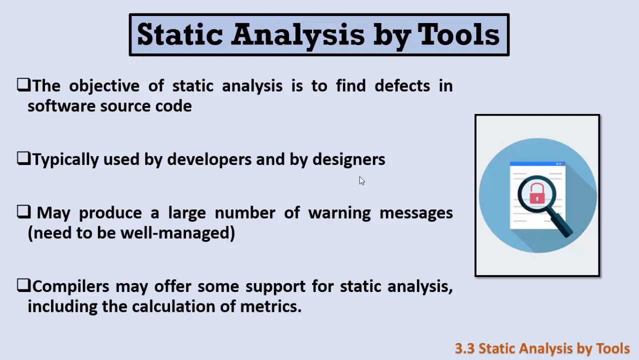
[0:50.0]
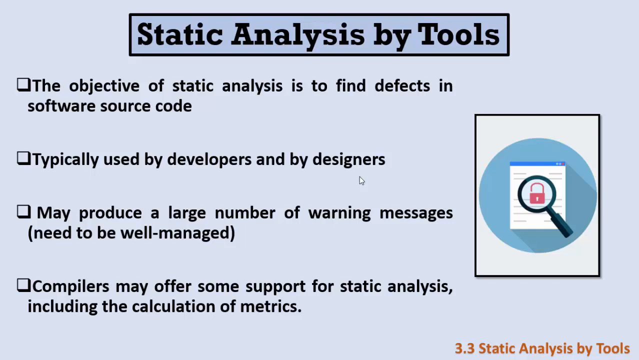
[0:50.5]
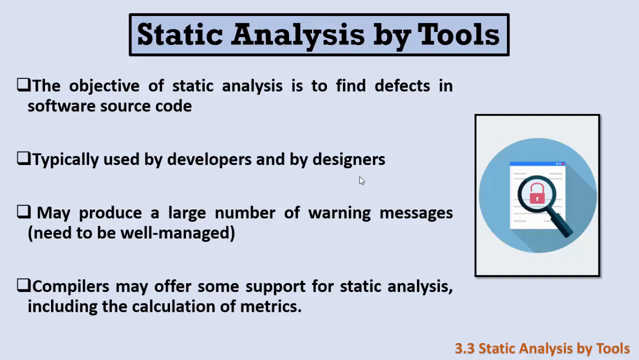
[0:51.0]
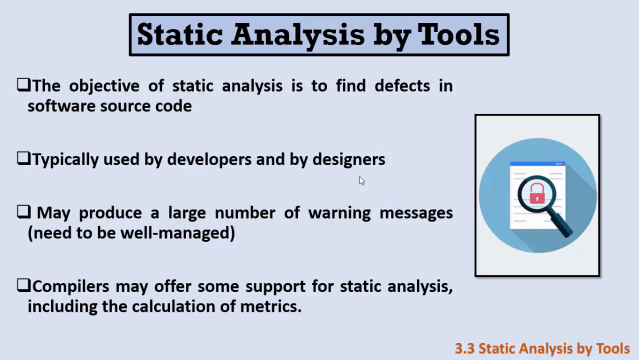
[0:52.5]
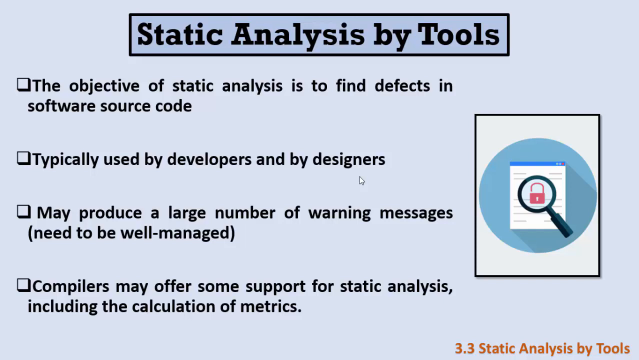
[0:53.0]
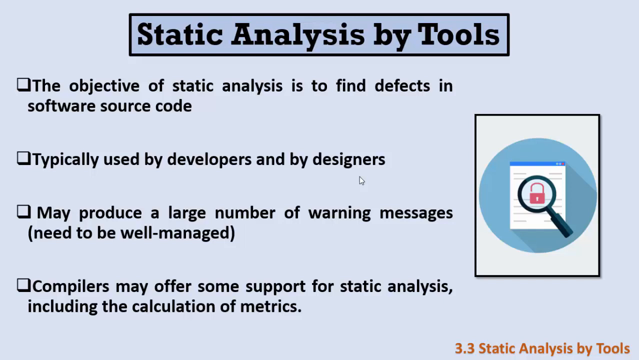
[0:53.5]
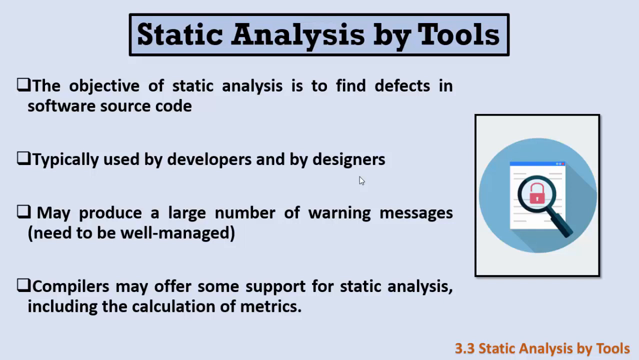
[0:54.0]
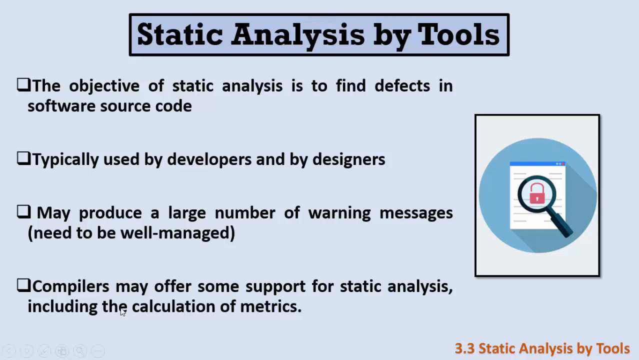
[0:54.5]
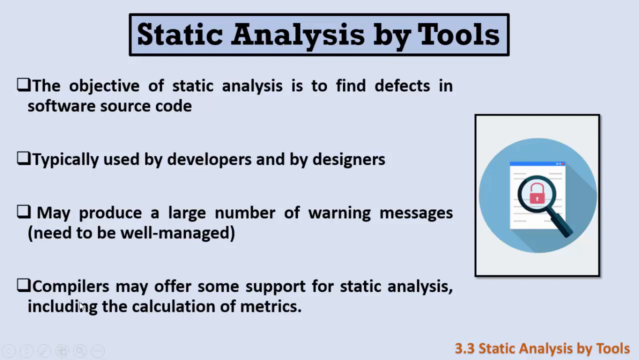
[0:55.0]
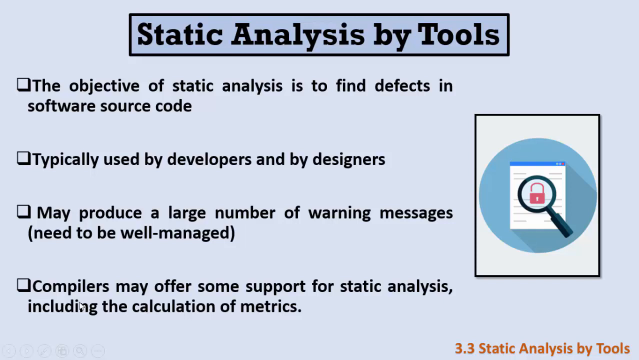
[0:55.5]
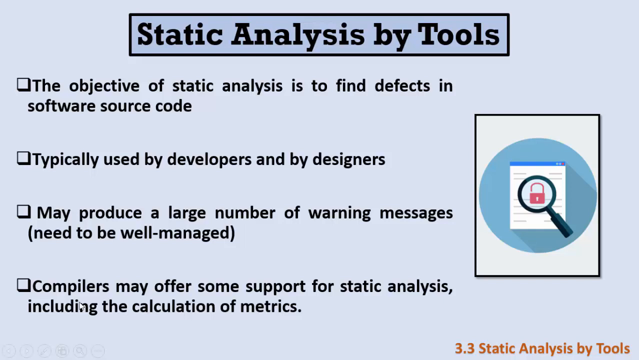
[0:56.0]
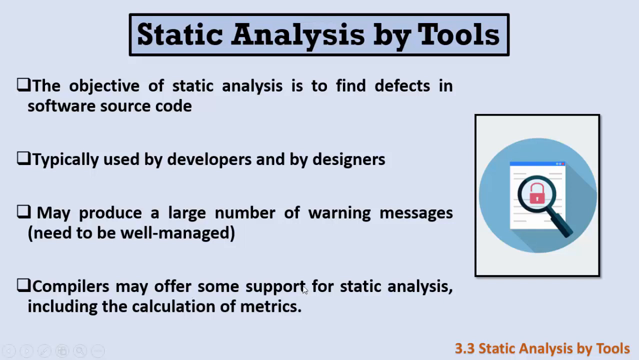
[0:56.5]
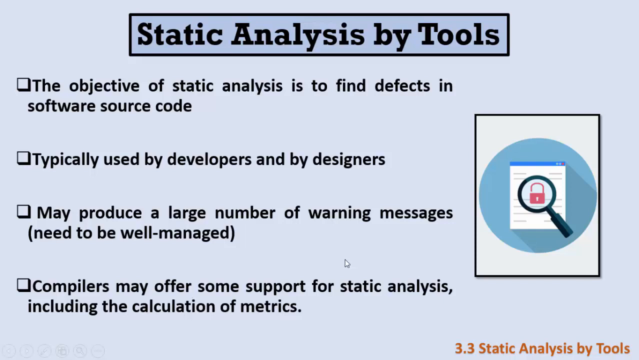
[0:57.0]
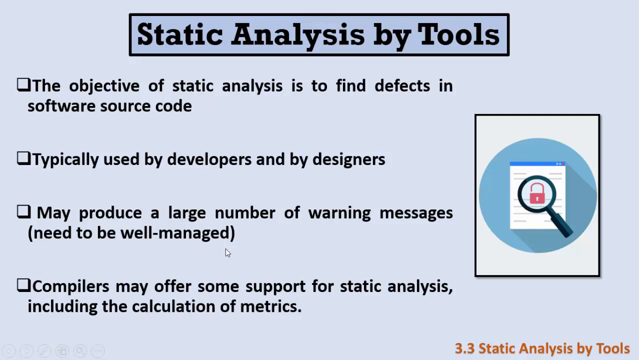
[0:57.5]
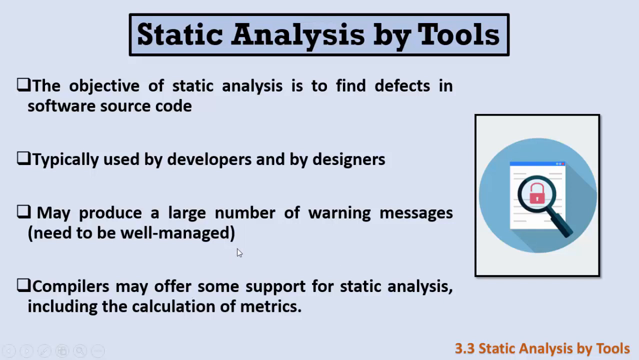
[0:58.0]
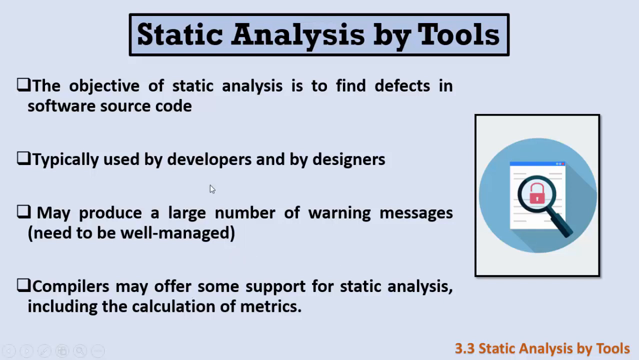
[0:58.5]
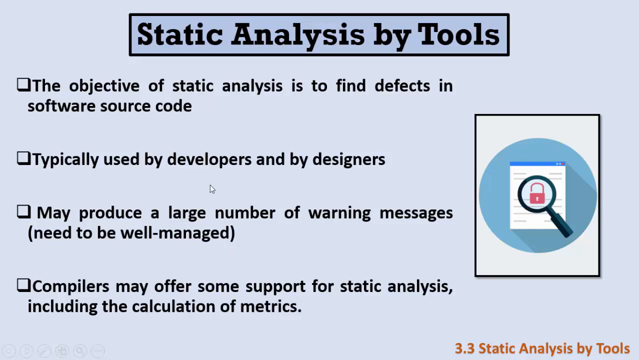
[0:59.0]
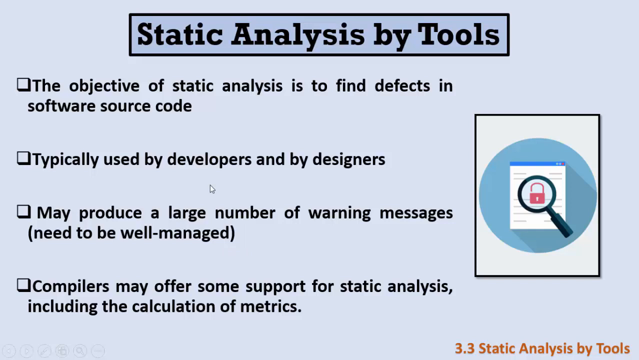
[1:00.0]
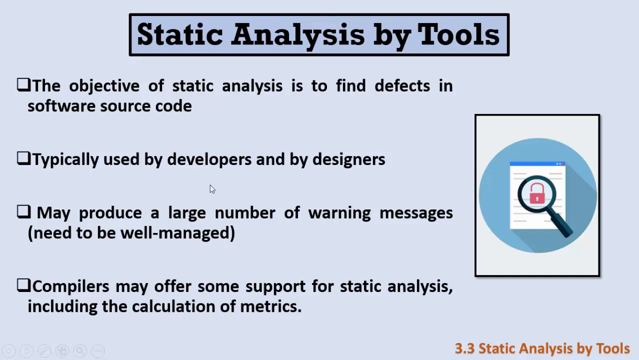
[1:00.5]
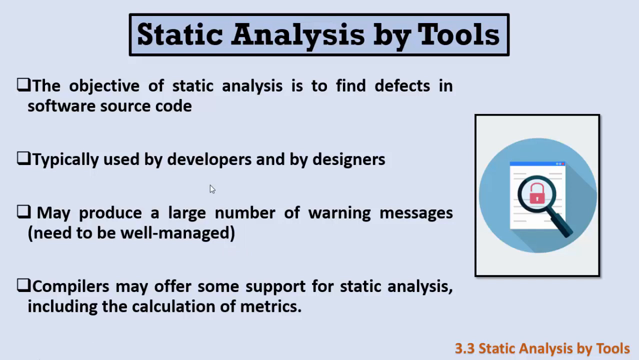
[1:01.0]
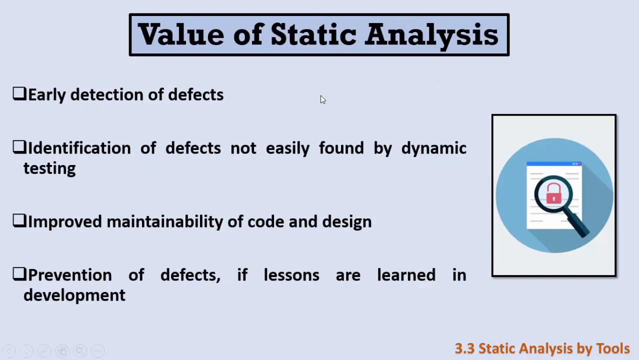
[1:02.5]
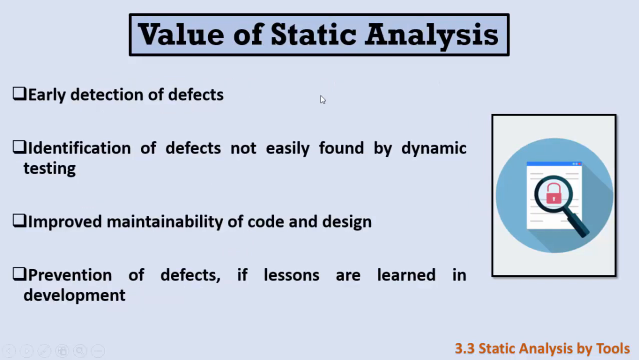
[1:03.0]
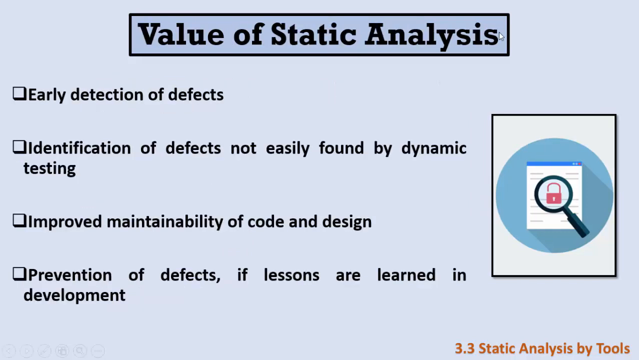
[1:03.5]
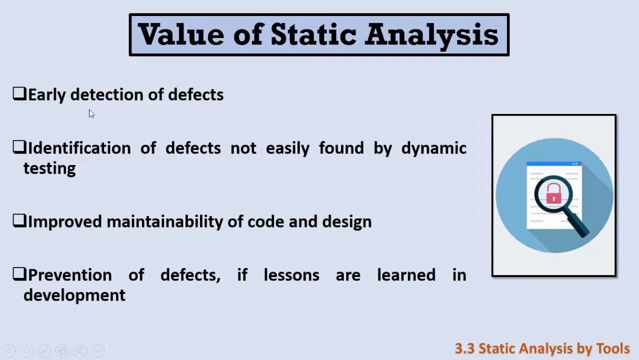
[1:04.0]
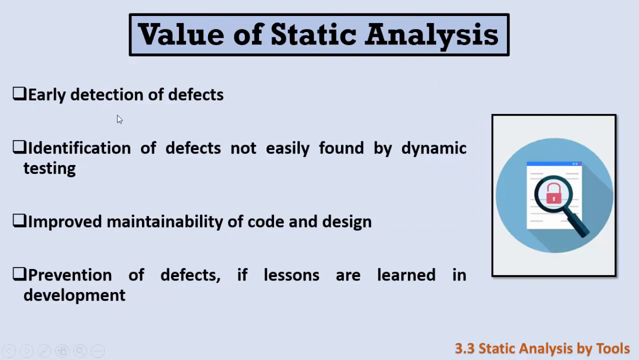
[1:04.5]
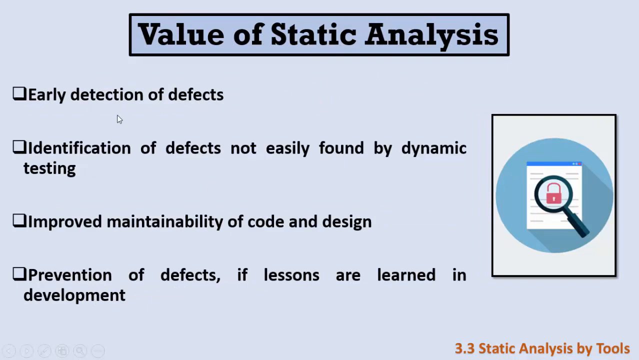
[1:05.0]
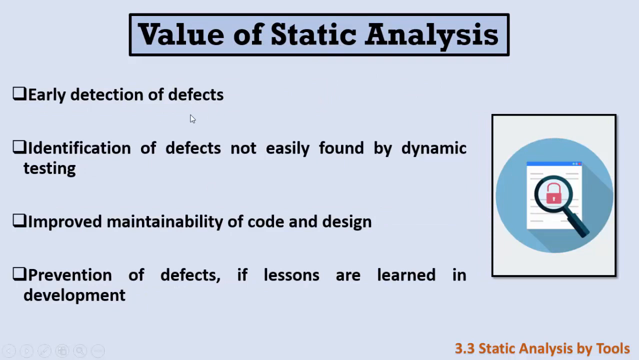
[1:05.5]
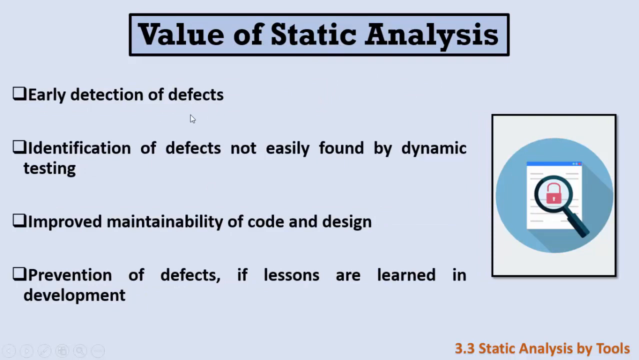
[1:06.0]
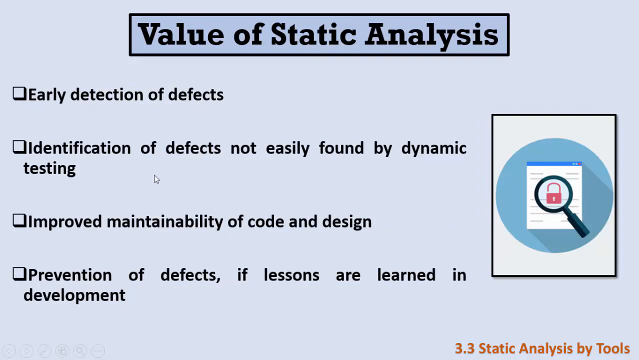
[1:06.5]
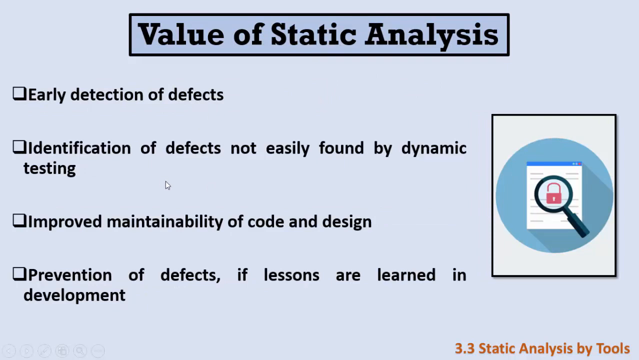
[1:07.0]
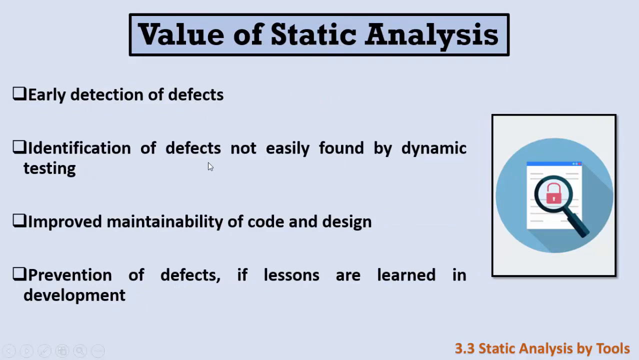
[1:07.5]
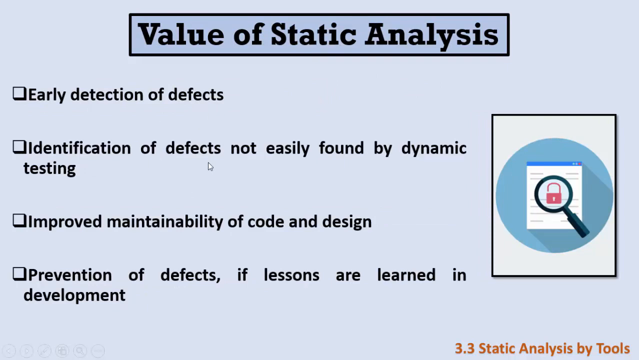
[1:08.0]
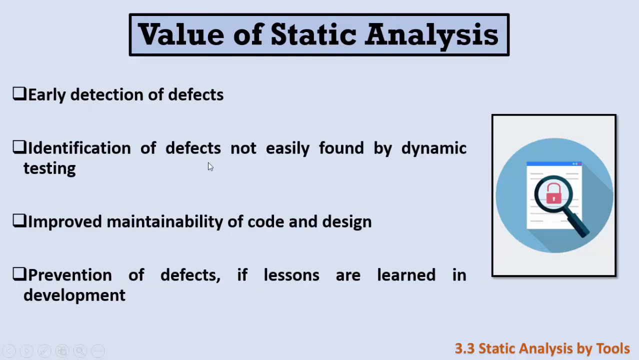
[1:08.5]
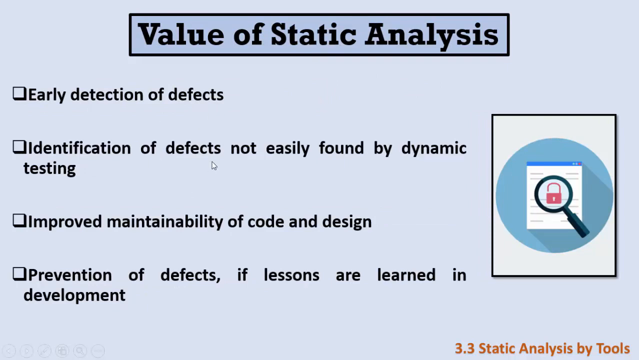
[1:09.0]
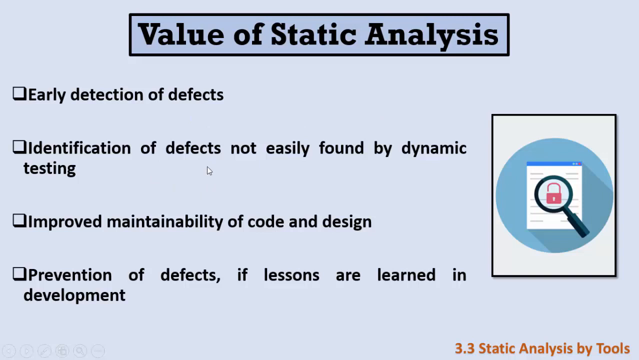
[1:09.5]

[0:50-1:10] The screen titled "Static Analysis by Tools" remains, with a light bluish-grey background, but its four points change to: "early detection of defects", "identification of defects not easily found by dynamic testing", "improved maintainability of code and design", and "prevention of defects if lessons are learned in development". On the right side is the same icon of a magnifying glass over a padlock. The magnifying glass hovers over a screen or document inside a blue circle, and the blue circle is inside a vertical white rectangle with a black border. In the lower right corner, orange text reads "3.3 Static Analysis by Tools", which seems to be the title of the video. Apart from the changing text, the only movement is the cursor moving around the text as if to emphasise it.